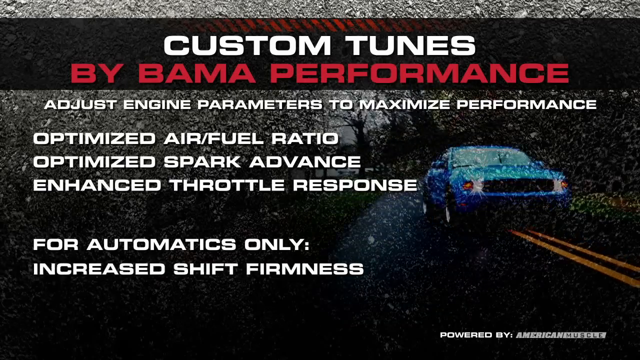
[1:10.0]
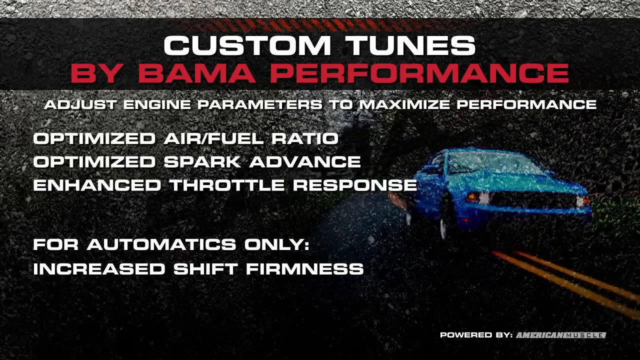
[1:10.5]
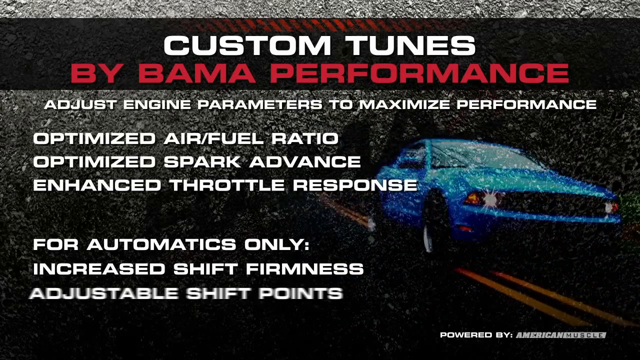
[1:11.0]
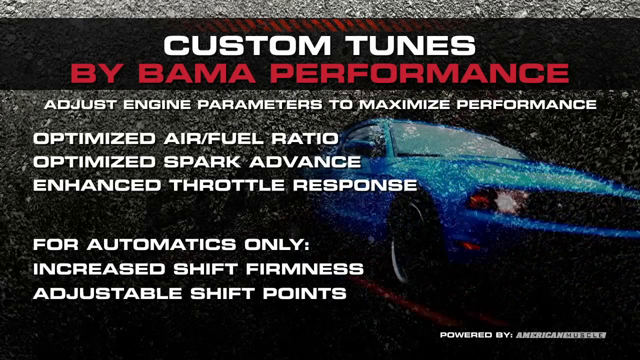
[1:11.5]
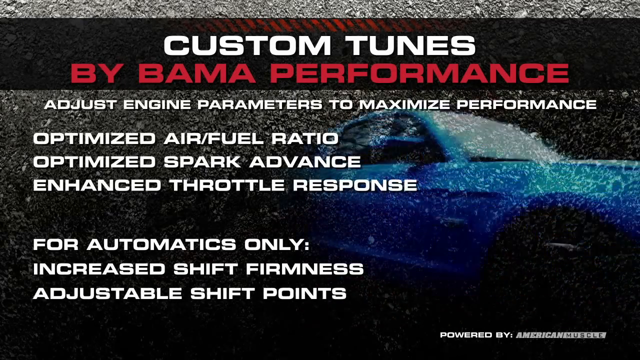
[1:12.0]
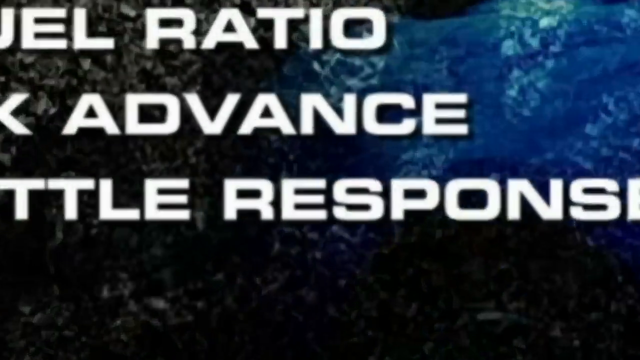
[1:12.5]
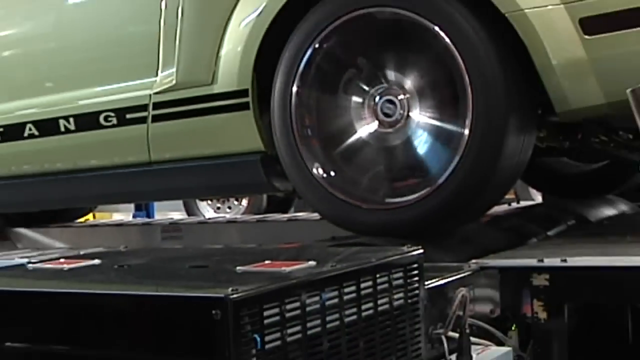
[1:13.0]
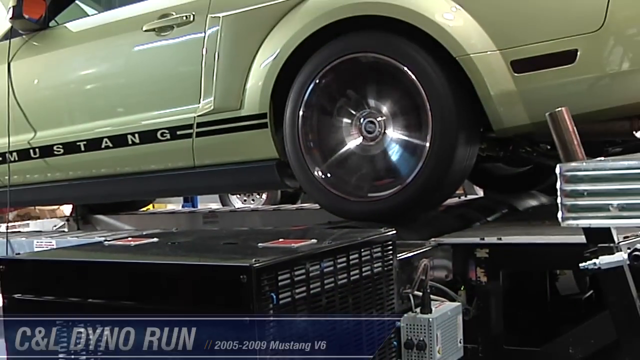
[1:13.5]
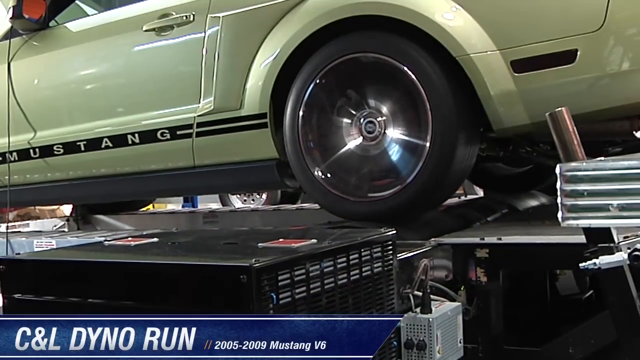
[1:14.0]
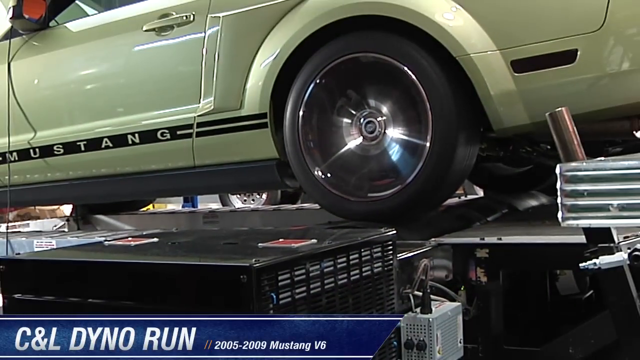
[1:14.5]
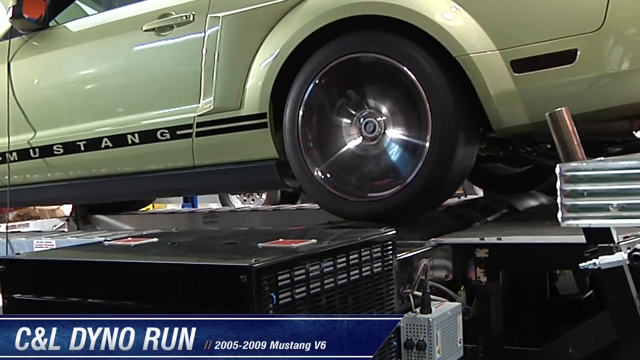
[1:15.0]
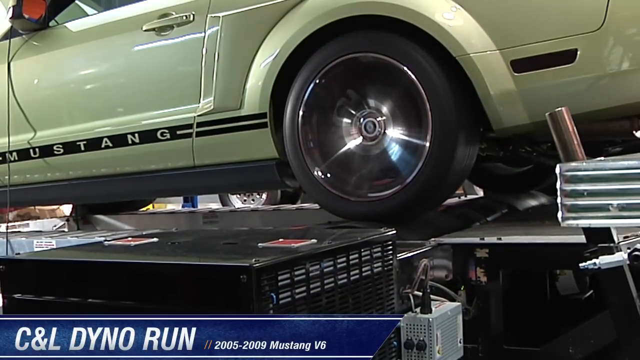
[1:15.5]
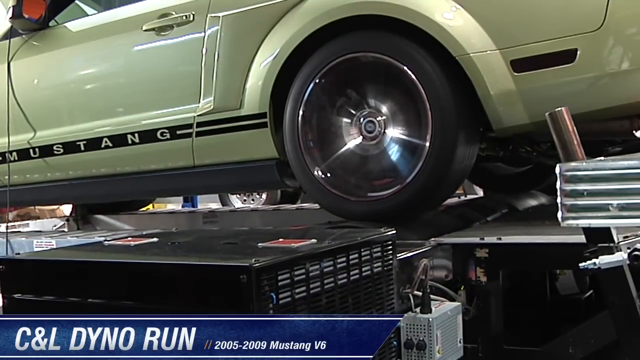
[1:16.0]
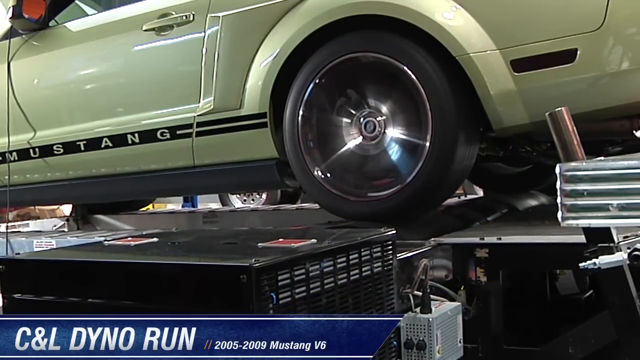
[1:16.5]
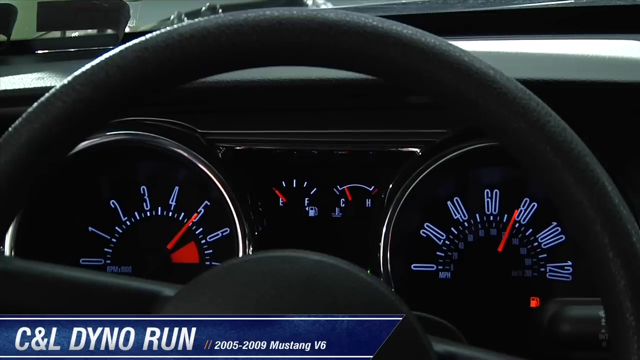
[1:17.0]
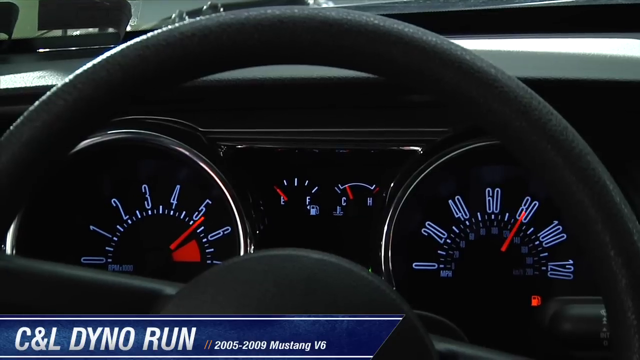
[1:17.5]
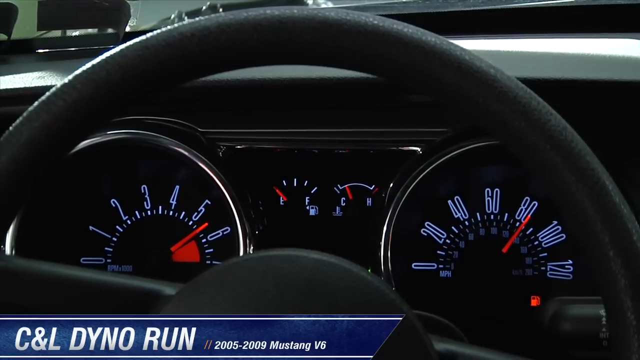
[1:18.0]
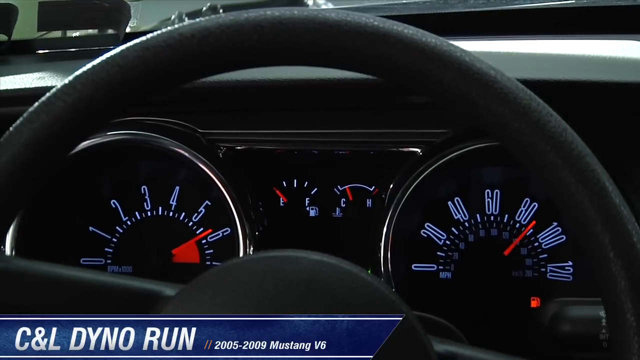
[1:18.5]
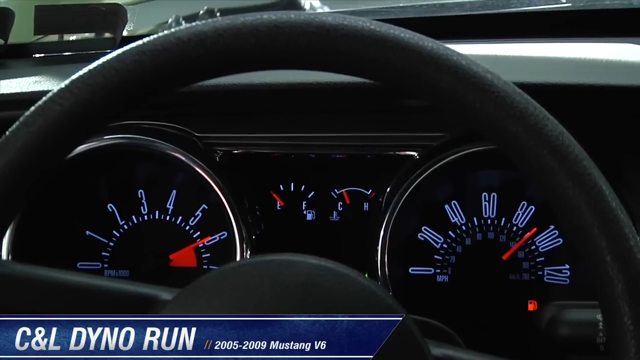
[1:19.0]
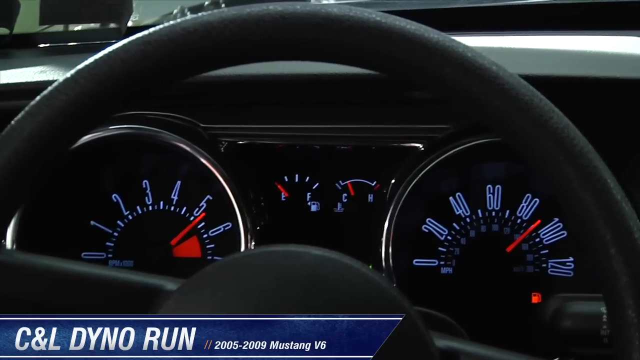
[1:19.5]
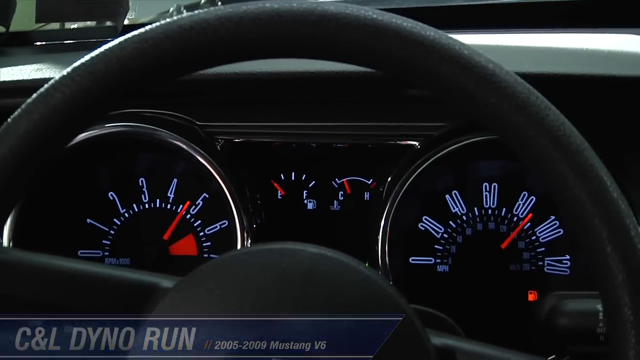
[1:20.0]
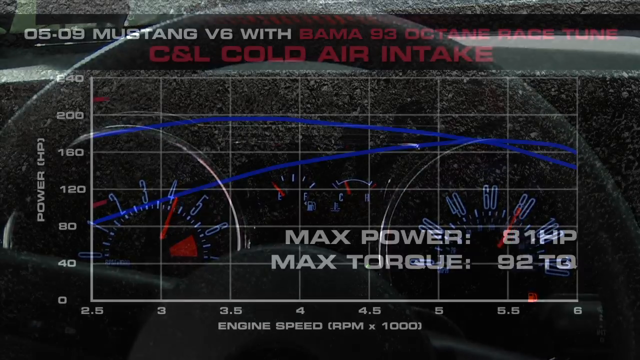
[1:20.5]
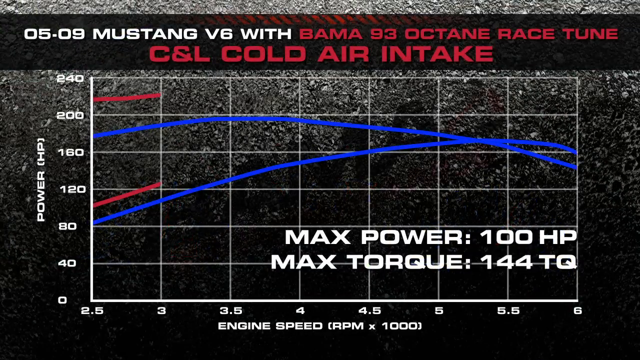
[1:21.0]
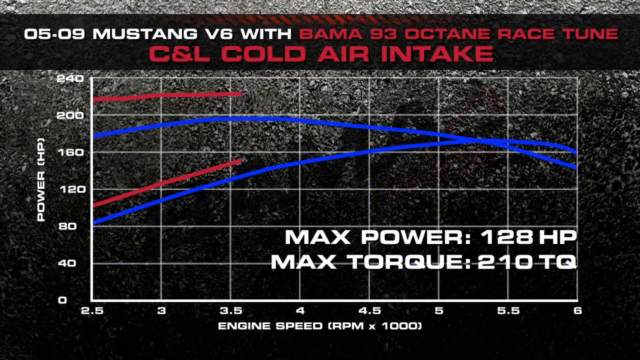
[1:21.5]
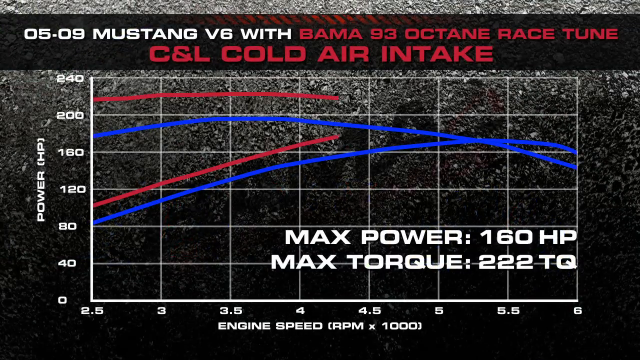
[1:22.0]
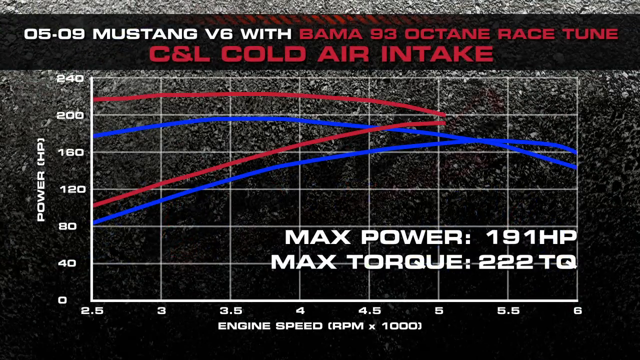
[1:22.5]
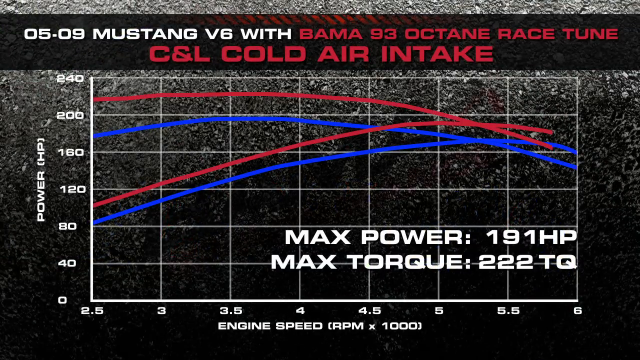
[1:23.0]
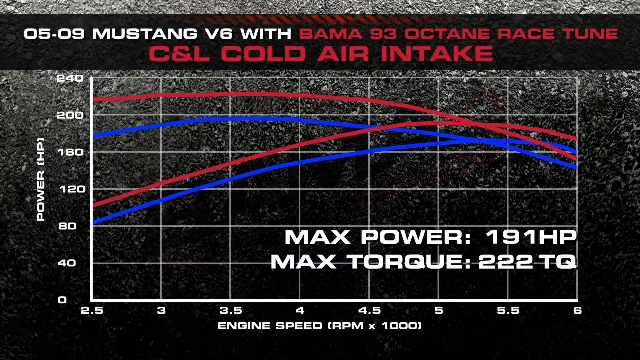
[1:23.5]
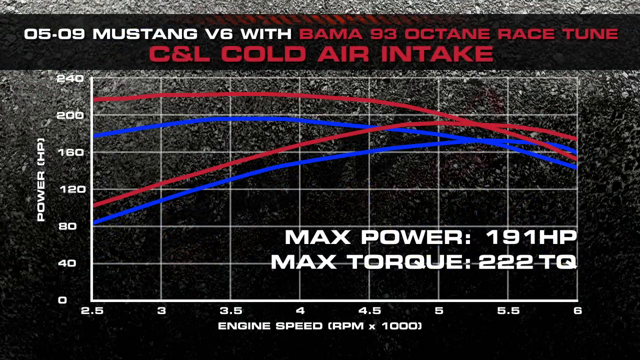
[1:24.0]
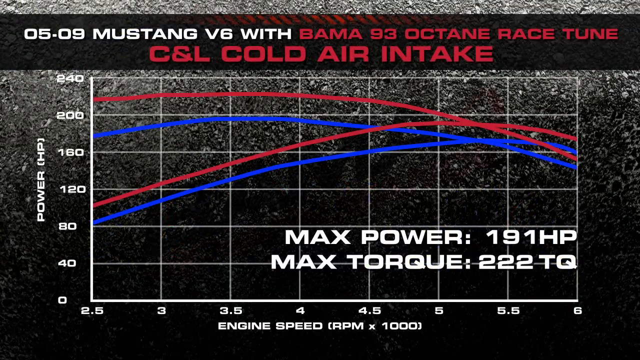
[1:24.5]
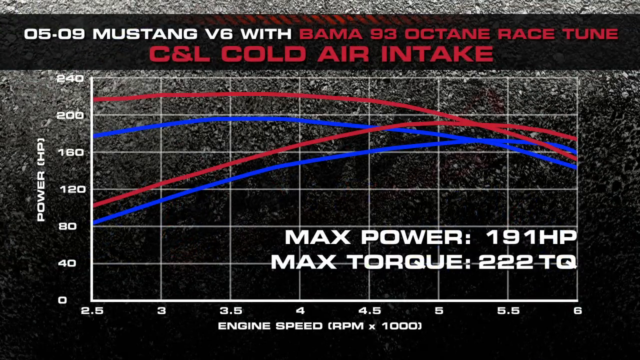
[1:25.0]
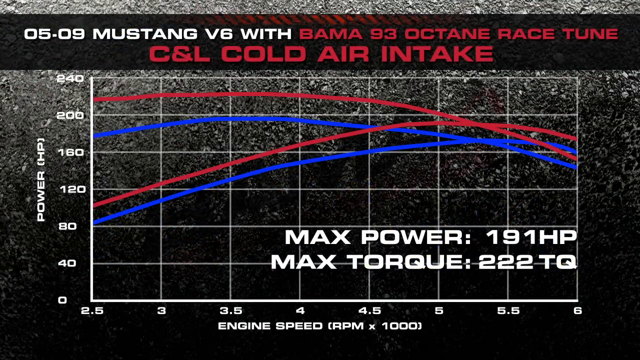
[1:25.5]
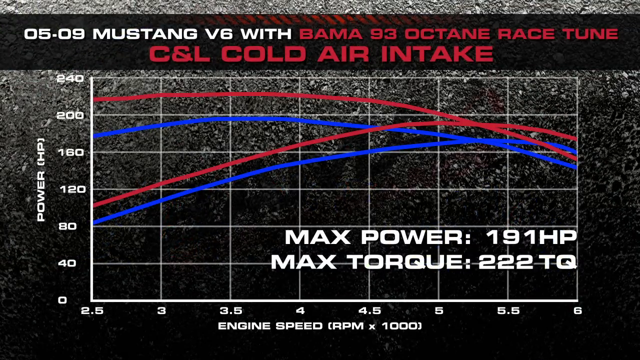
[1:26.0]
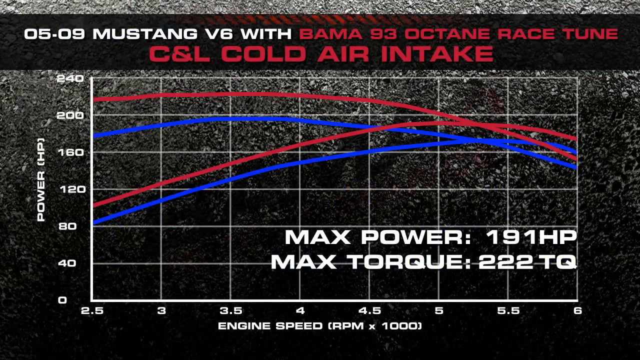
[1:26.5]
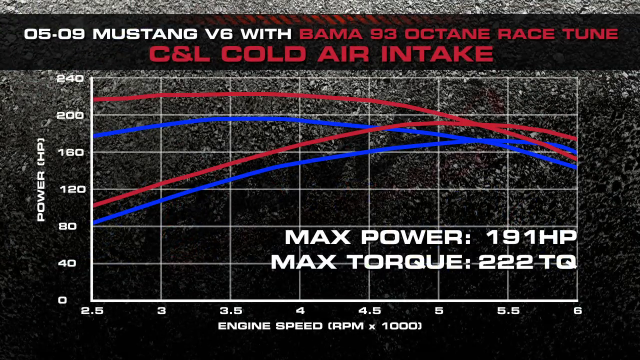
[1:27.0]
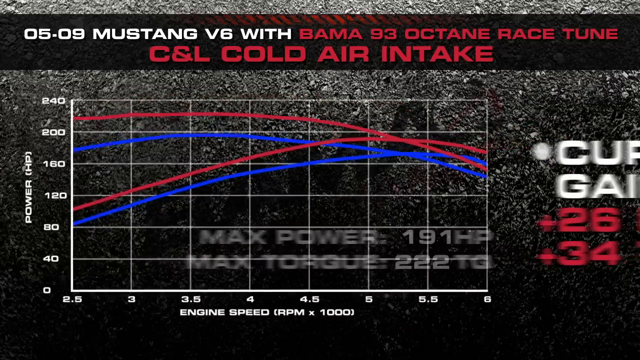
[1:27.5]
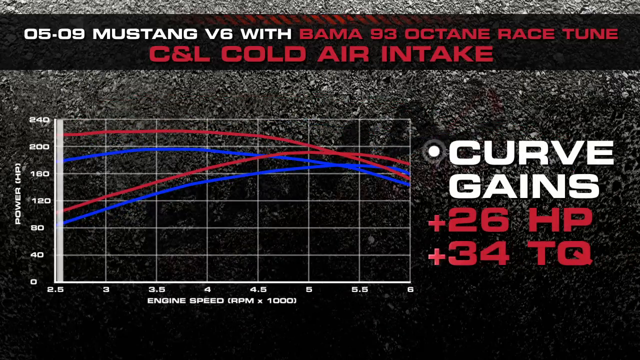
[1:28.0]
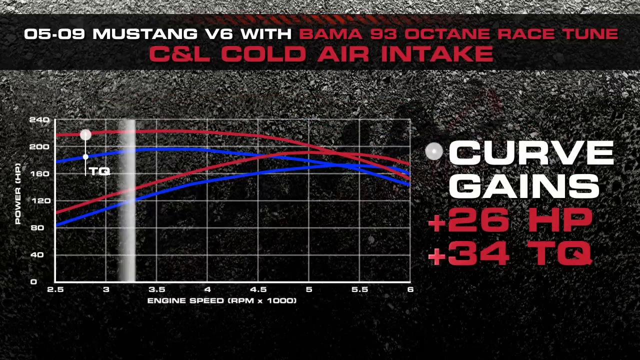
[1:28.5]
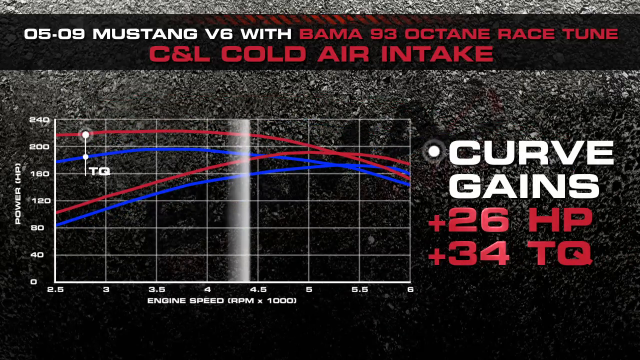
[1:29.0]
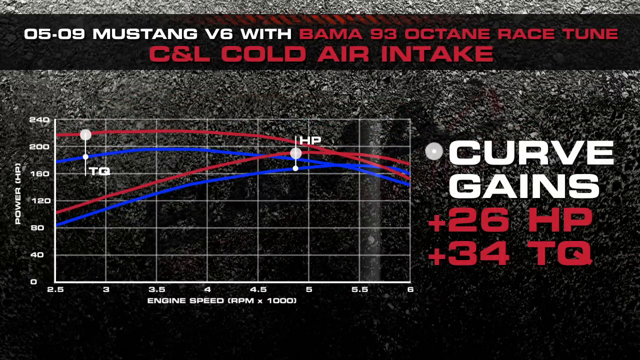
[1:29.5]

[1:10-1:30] Text appears on the screen while, on the right side, a slightly transparent video plays in the background of a blue vehicle driving on a road toward the viewer, diagonally to the bottom right. At the top middle it says "Custom Tunes by Bama Performance," with "Custom Tunes" in white and "by Bama Performance" in red. Below this, white text says "Adjust Engine Parameters to Maximize Performance." On the left side, going downward, it says "Optimize Air-Fuel Ratio," "Optimize Spark Advance," "Enhance Throttle Response," and "for Automatics Only, Increased Shift Firmness," with the lines appearing one at a time. The scene changes to the left rear of a vehicle, where the wheel and the silverish rim are sort of spinning very rapidly; the wheel is black. A close-up inside the vehicle shows the black steering wheel and the speedometer, which has white numbers; the red line on the speedometer goes up to max out, apparently as the wheel spins rapidly during a test of the vehicle's max power and torque. A graph-like screen follows. At the top left it says "Mustang V6 with Bama 93 Octane Race Tune," and below that the checkered graph shows max power of 191 and max torque of 222. A new pop-up appears that says "Curve Gains 26 HP 34 TQ."